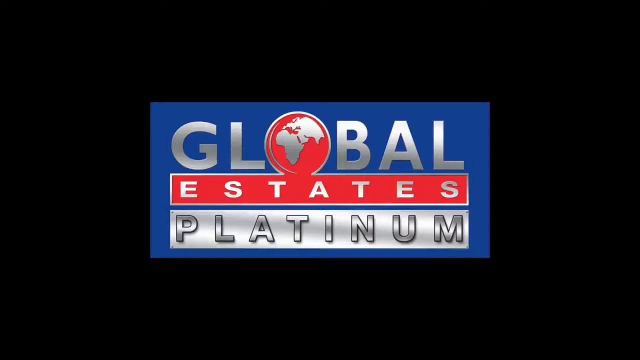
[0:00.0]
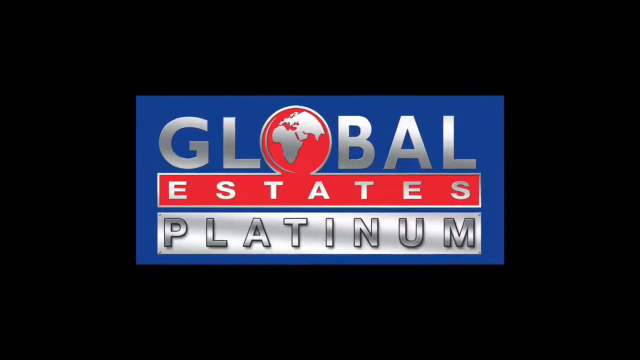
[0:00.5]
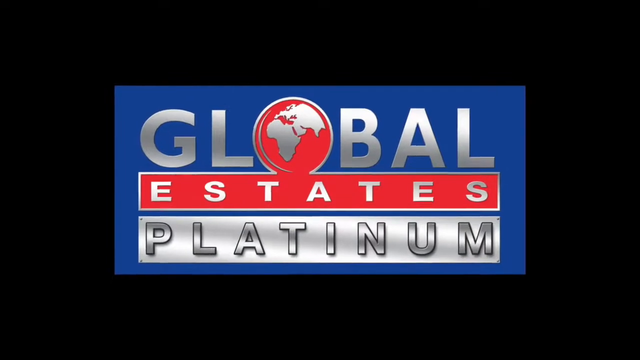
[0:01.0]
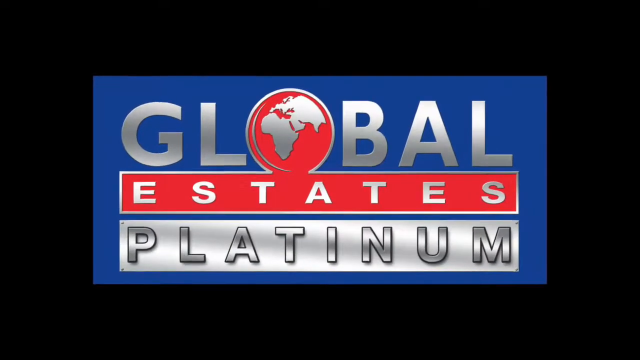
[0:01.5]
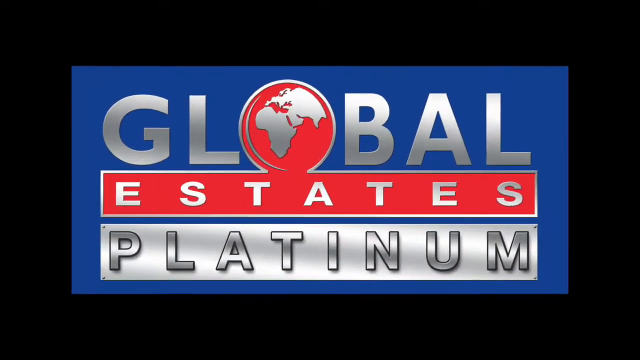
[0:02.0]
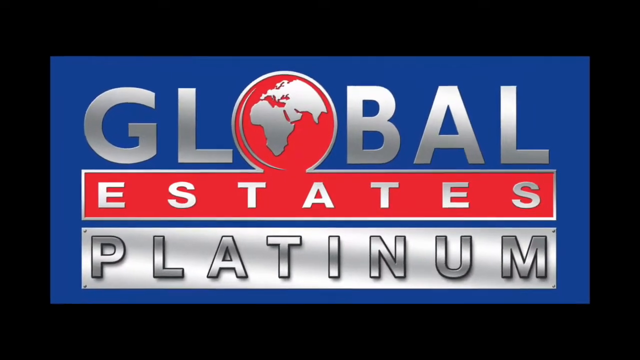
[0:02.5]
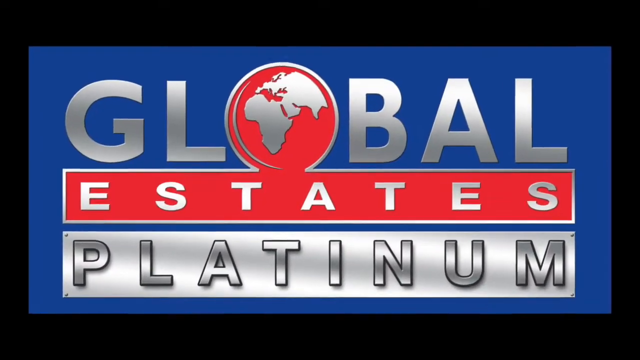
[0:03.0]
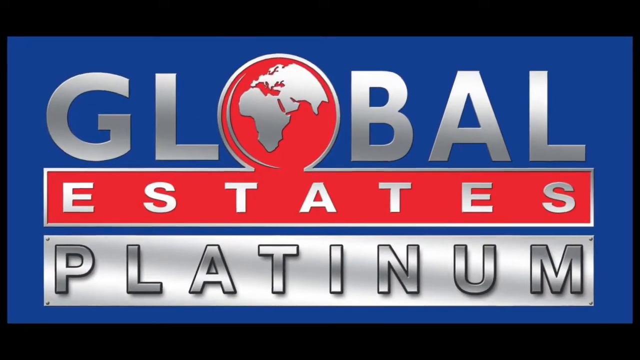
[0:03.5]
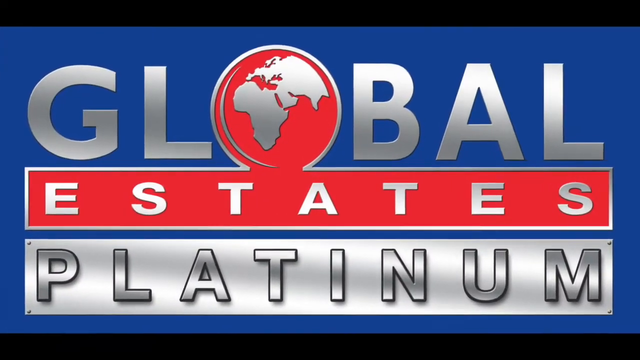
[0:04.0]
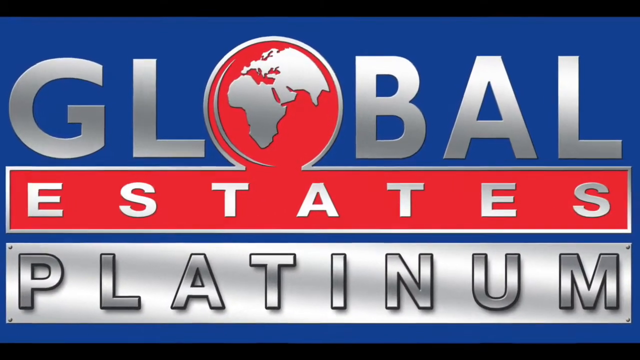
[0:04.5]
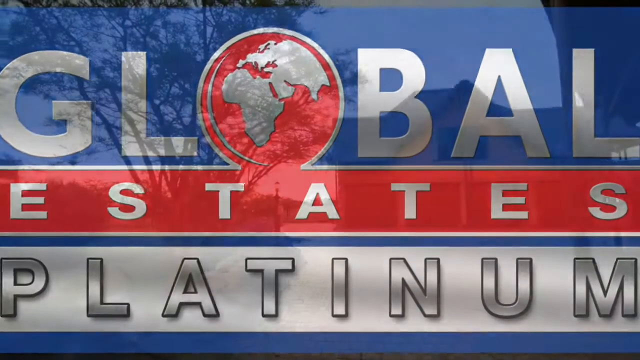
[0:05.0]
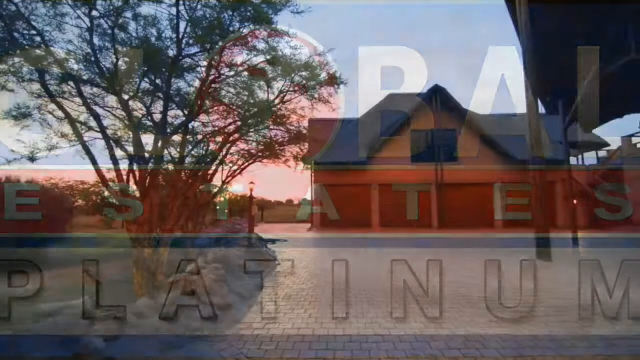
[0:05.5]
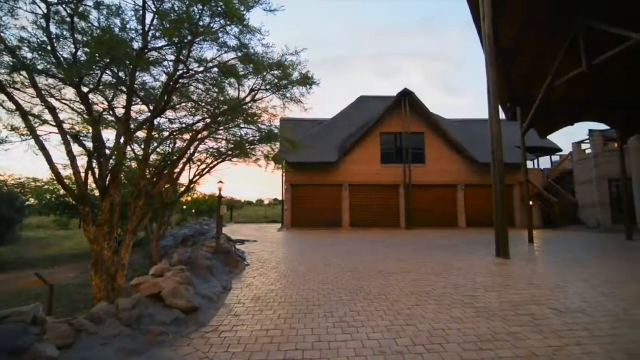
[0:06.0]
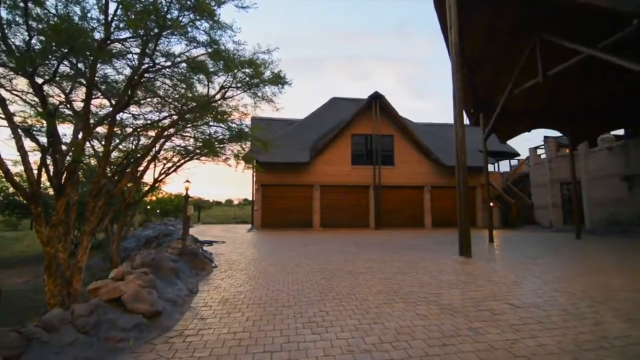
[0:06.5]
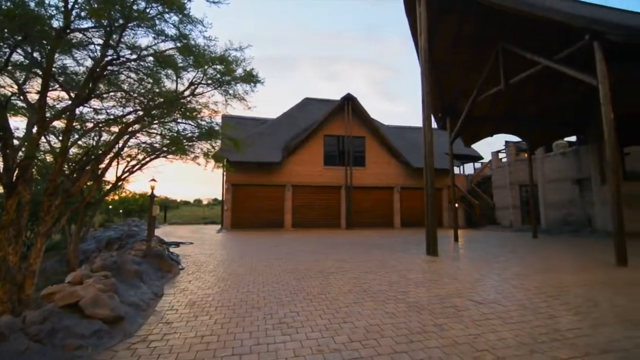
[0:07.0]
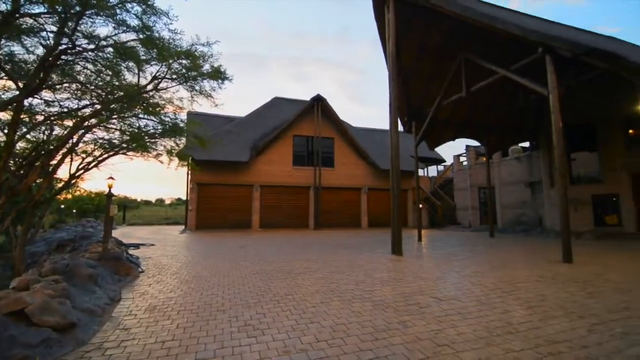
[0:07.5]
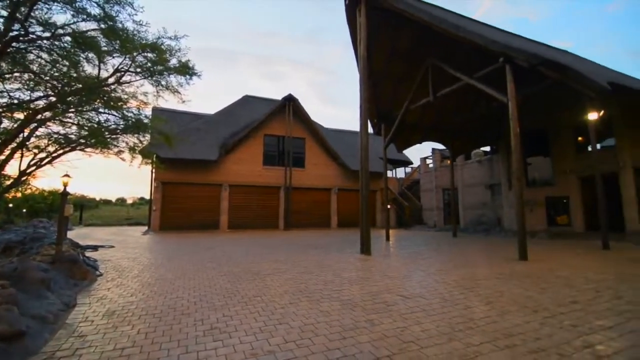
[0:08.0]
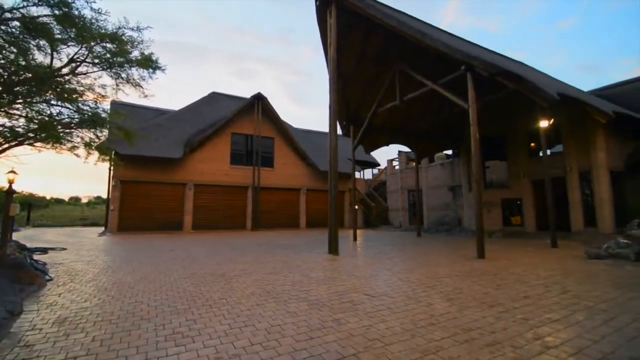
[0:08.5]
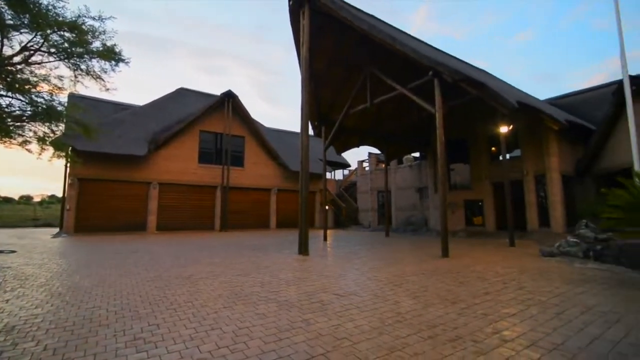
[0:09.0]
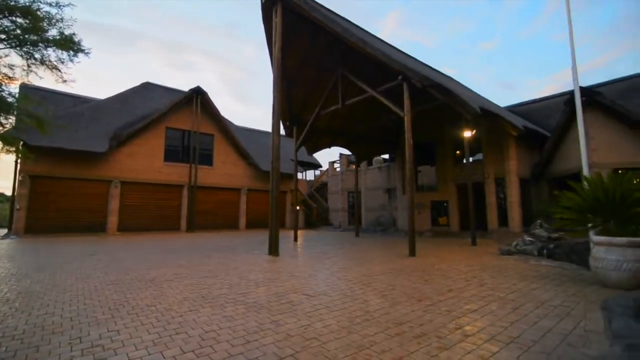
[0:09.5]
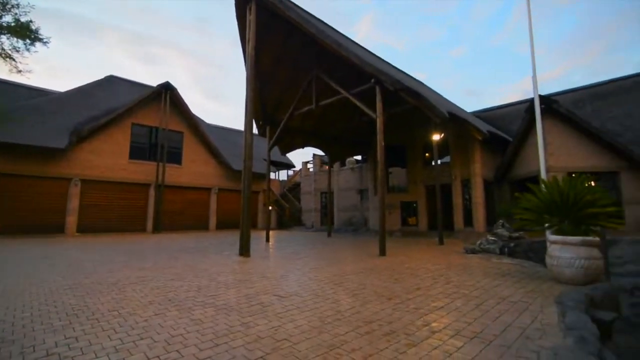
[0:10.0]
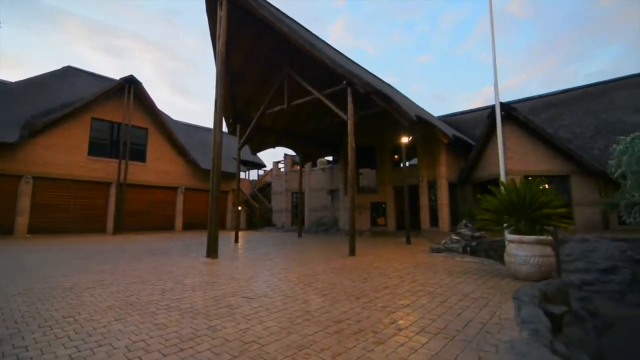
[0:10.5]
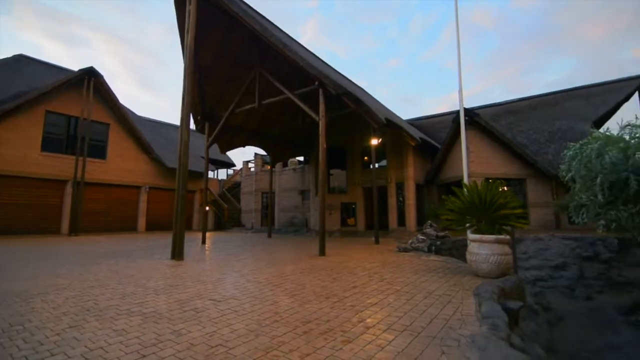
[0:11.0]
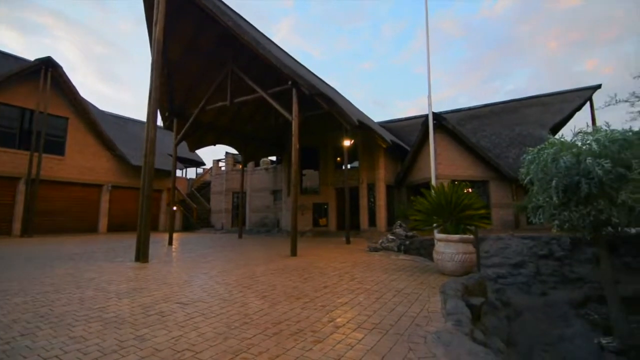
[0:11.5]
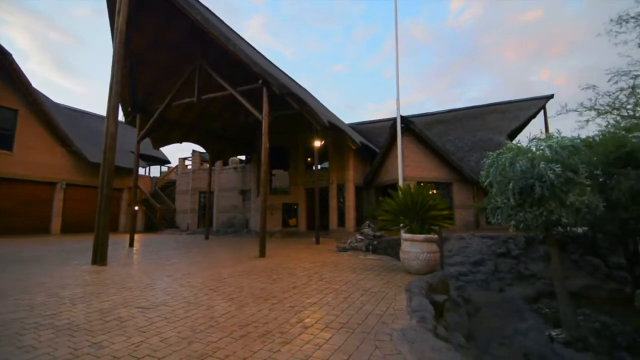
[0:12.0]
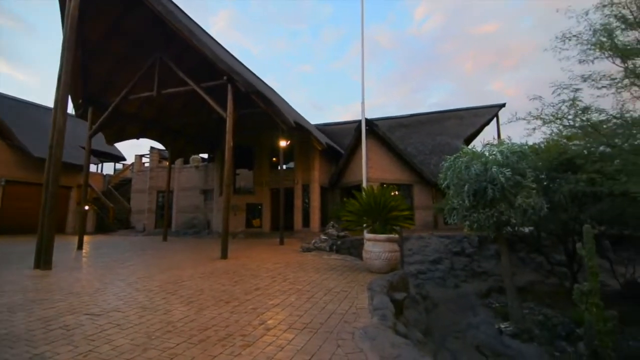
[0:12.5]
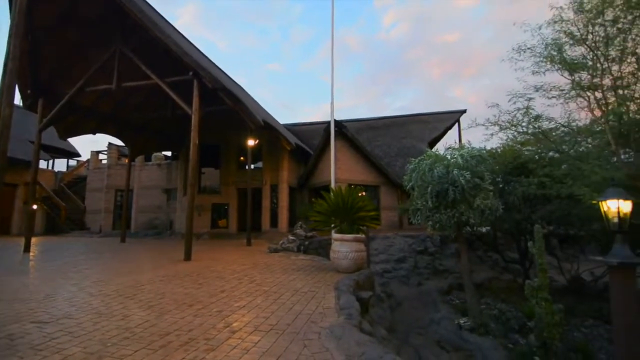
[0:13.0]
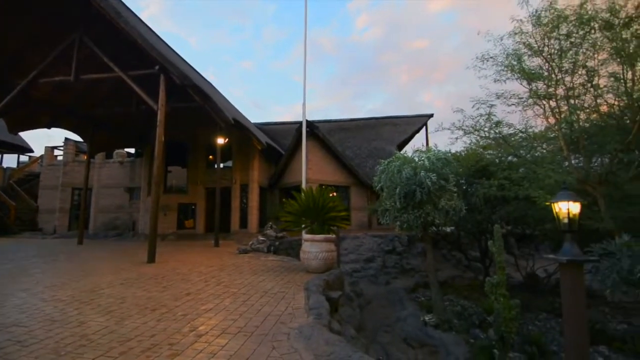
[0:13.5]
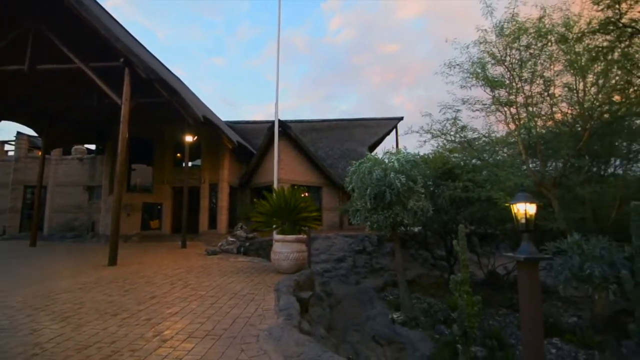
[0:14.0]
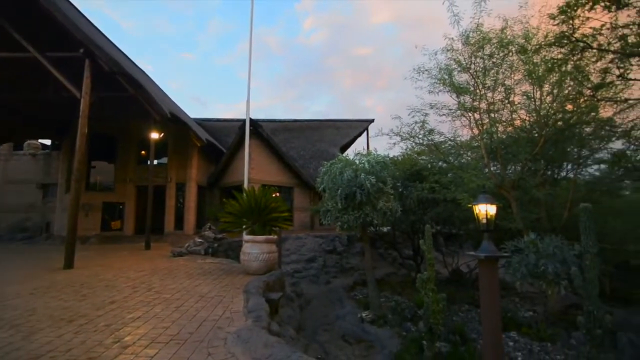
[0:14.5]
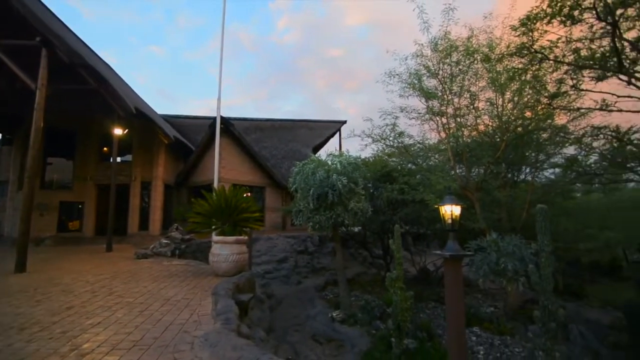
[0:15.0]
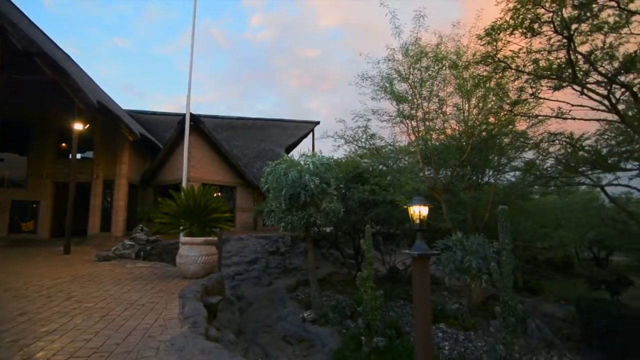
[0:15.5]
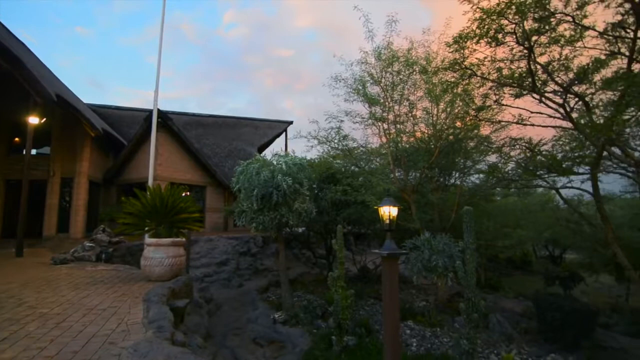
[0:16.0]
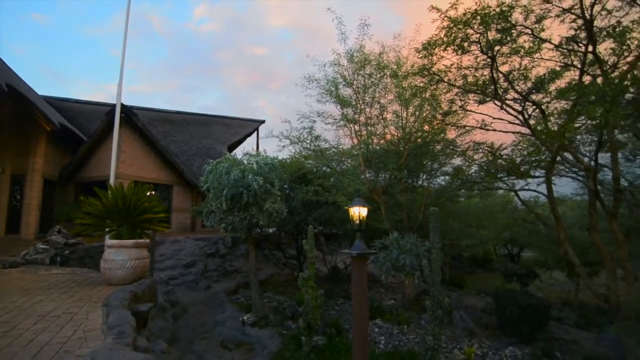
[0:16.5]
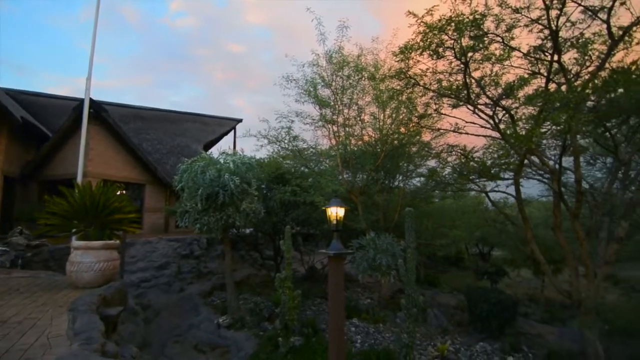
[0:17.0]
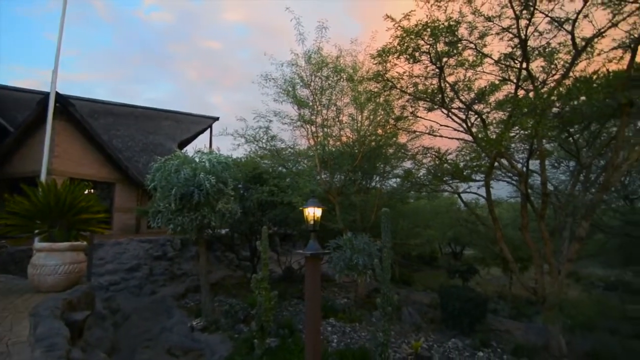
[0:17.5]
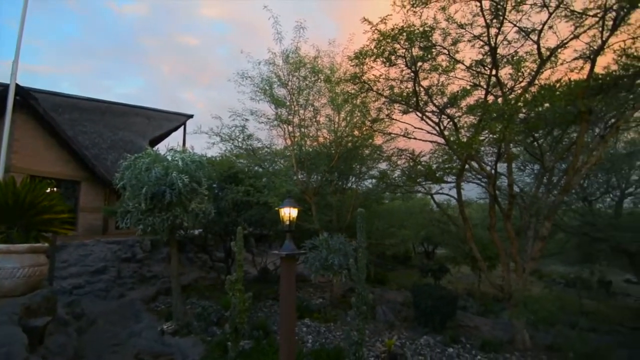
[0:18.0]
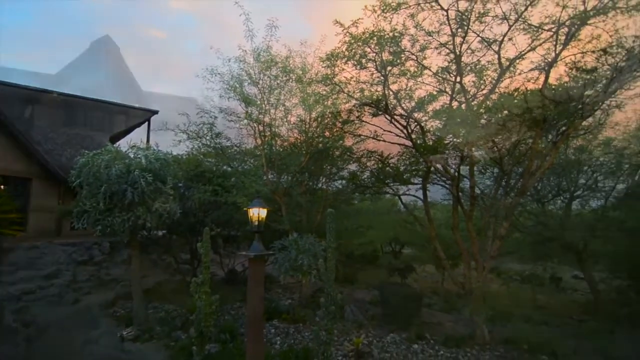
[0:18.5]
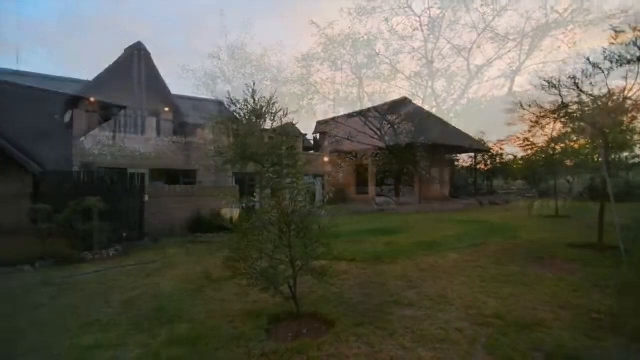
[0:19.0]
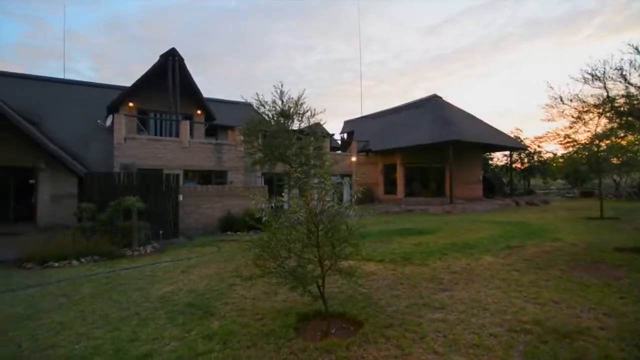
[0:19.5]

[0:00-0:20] The video opens with a sign reading "Global Estates Platinum" that starts small and grows until it covers the screen. A rather large house appears, and its outside seems to be flooded. It doesn't appear that anybody lives there. A light is on outside, and lights are on on the house itself as the video scans around it. The house has a four-car garage, either detached or attached, with maybe a walkway, and a very big overhang that comes out from the front. It looks like the house backs up to a lake. It seems to have been abandoned for a while: the grass has come back but is not manicured at all, things look overgrown, and the property is not taken care of. No one is seen as the video pans around the house.